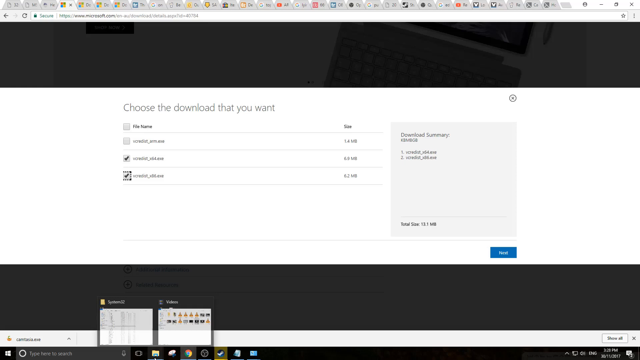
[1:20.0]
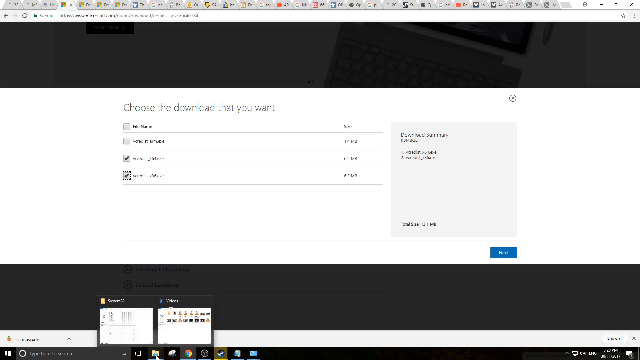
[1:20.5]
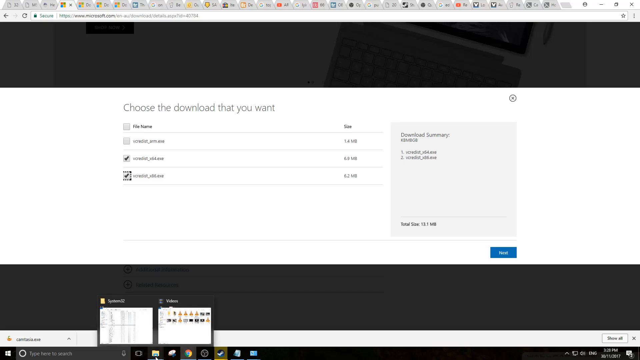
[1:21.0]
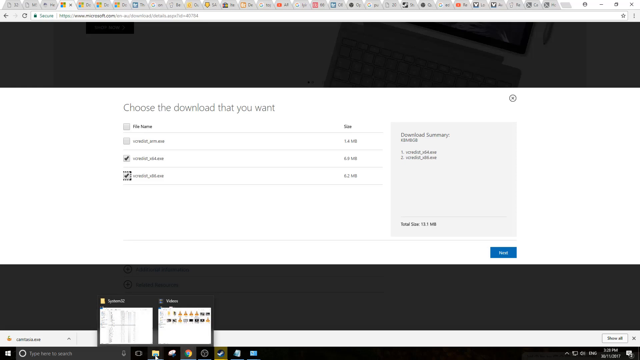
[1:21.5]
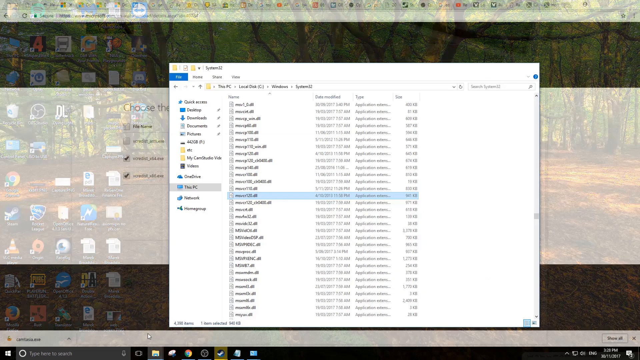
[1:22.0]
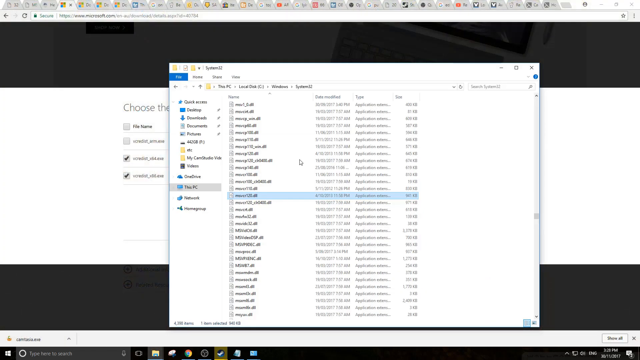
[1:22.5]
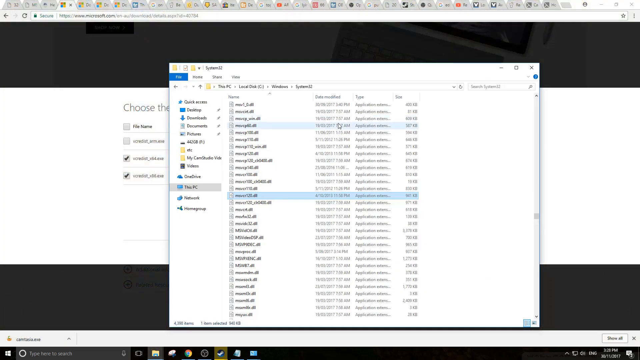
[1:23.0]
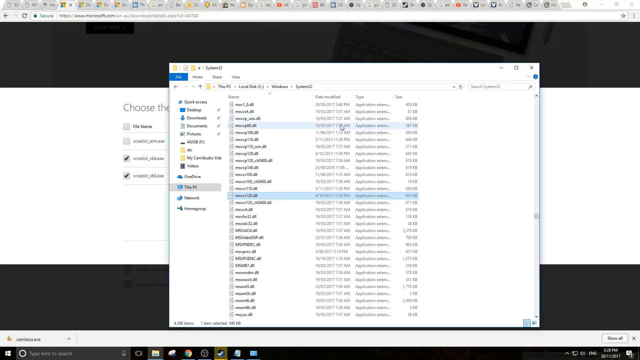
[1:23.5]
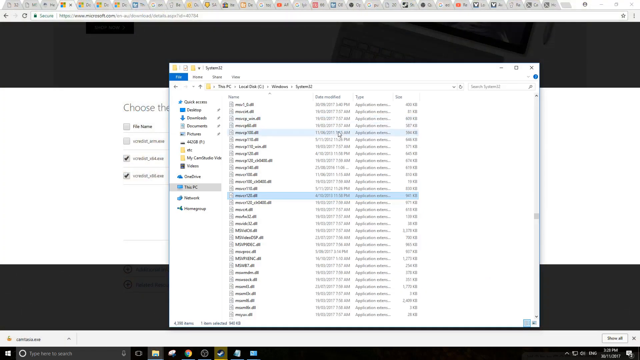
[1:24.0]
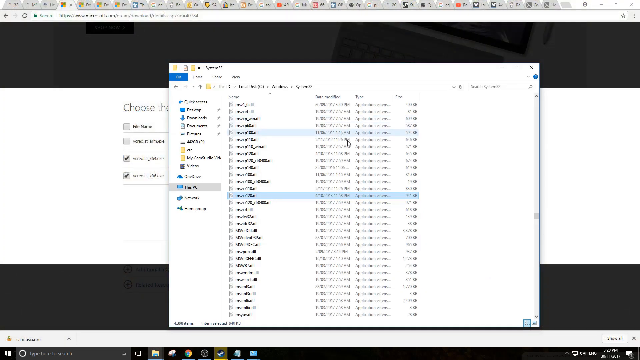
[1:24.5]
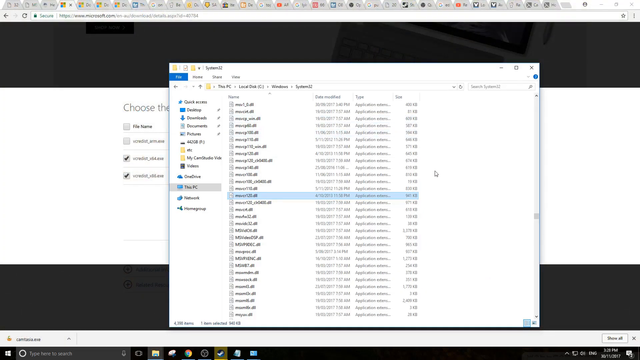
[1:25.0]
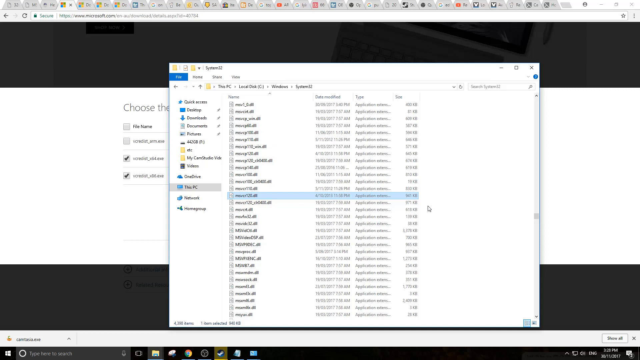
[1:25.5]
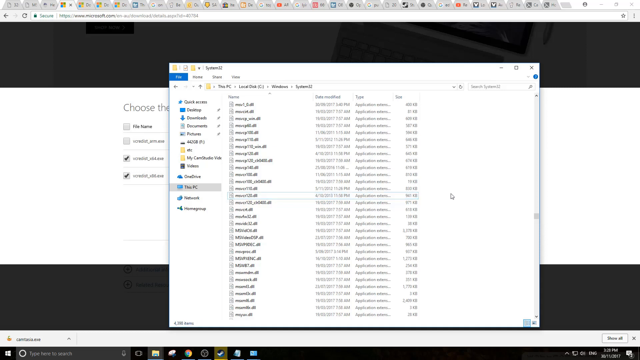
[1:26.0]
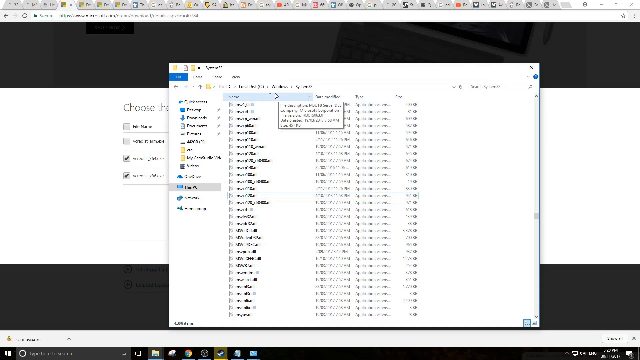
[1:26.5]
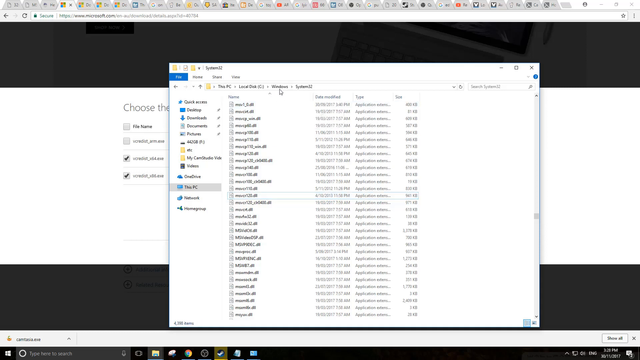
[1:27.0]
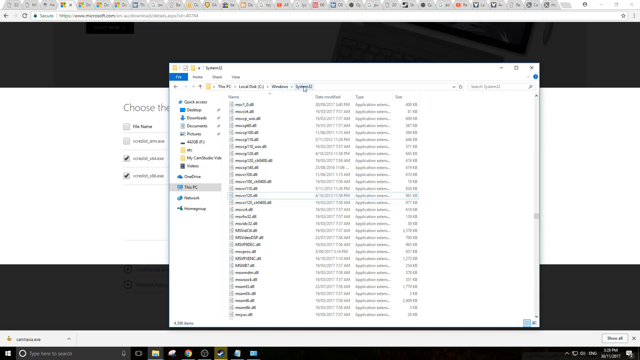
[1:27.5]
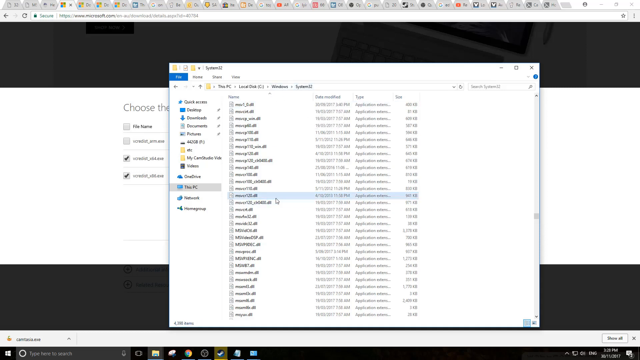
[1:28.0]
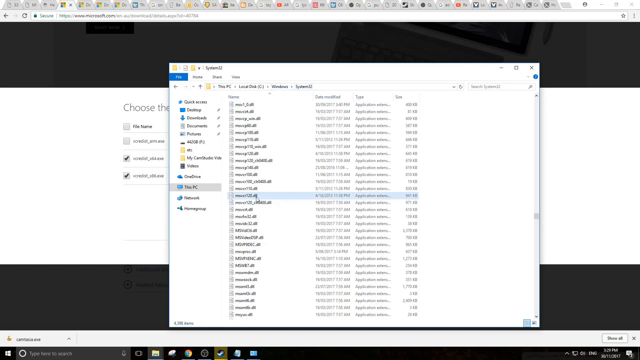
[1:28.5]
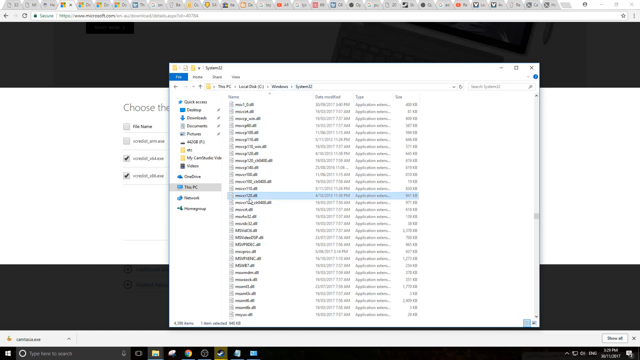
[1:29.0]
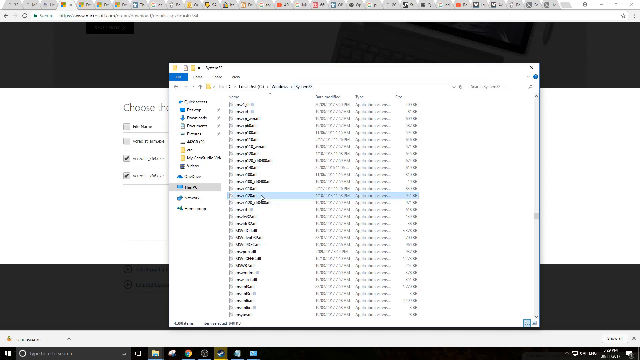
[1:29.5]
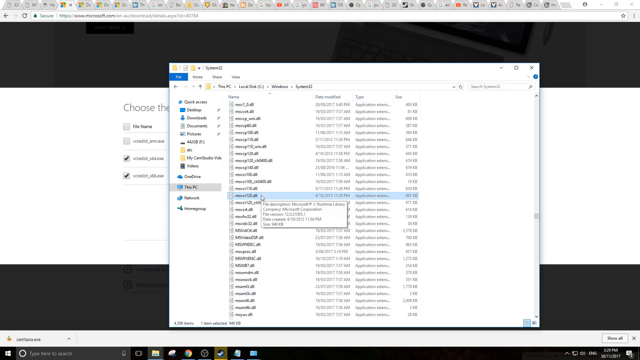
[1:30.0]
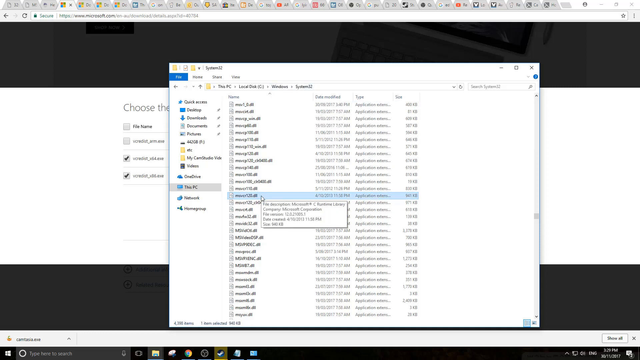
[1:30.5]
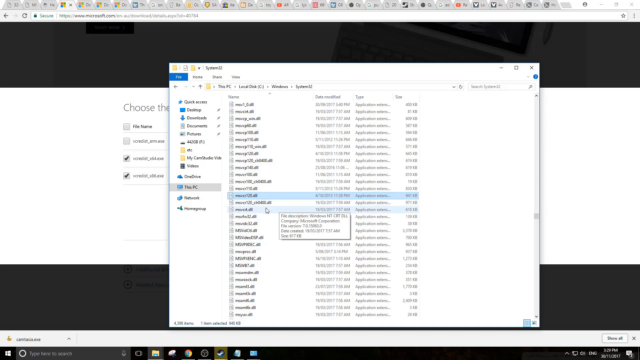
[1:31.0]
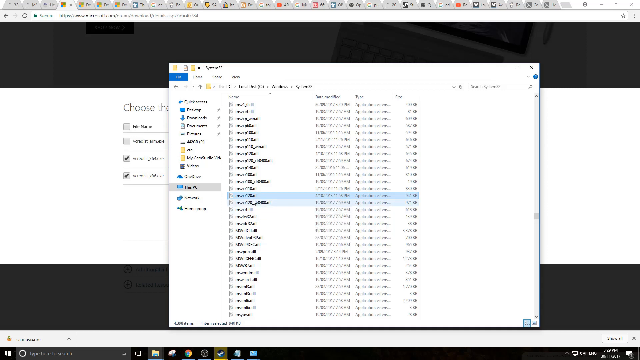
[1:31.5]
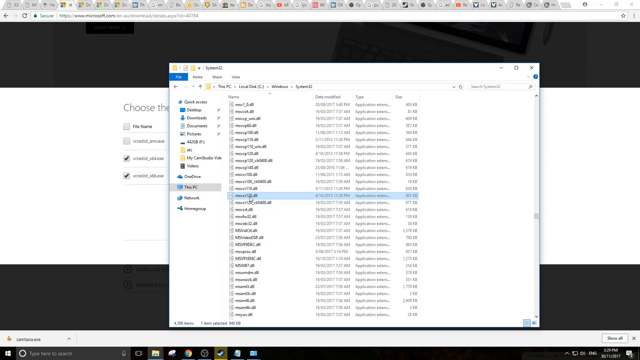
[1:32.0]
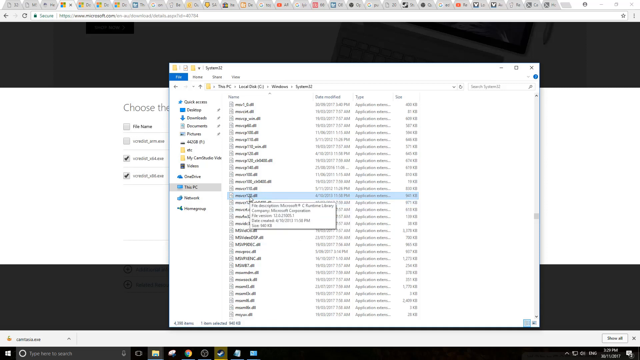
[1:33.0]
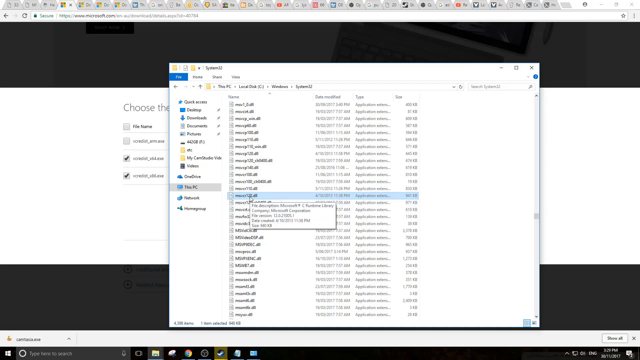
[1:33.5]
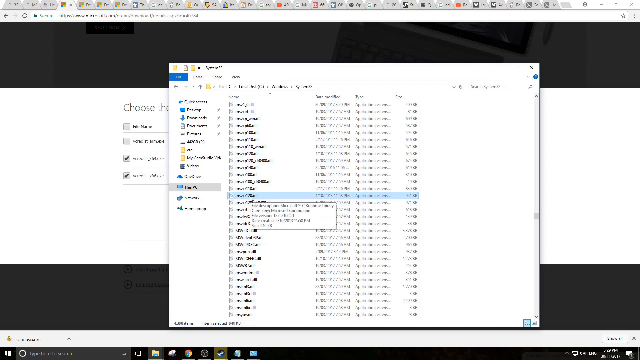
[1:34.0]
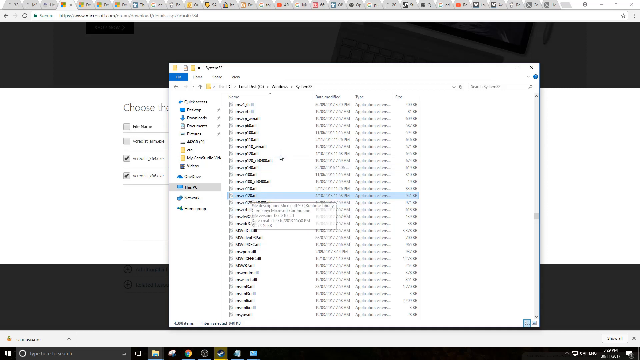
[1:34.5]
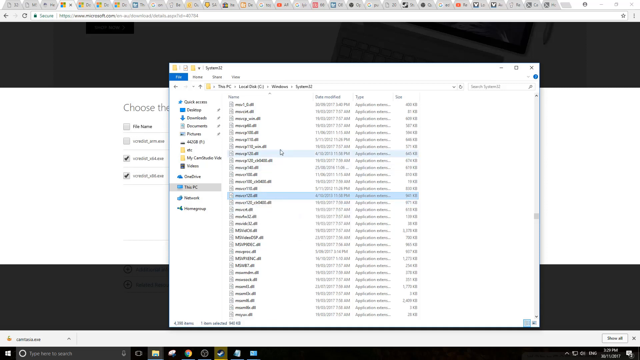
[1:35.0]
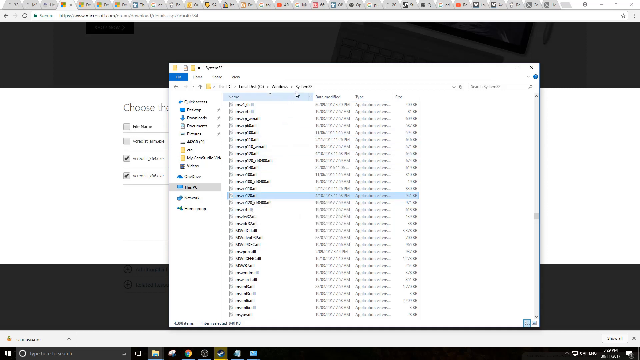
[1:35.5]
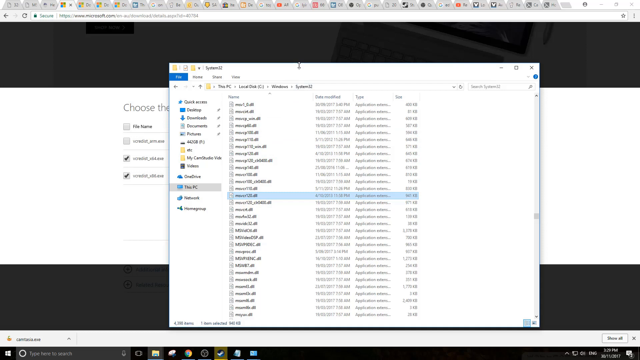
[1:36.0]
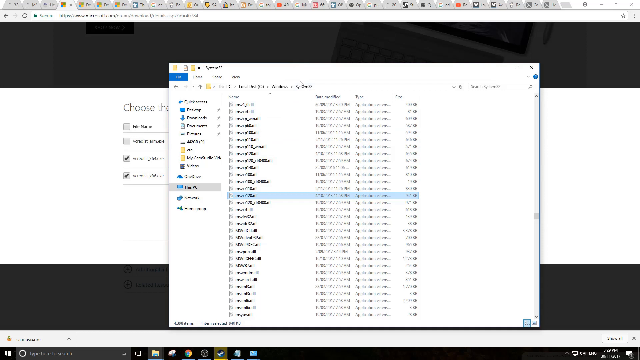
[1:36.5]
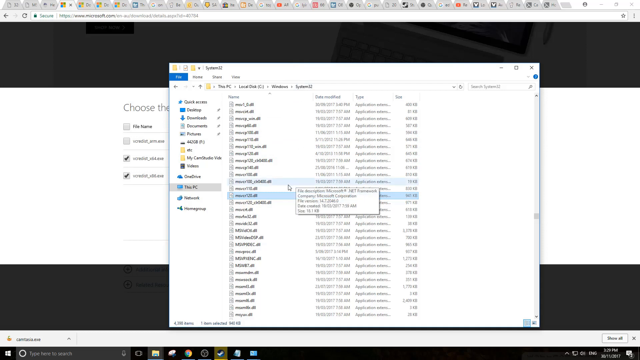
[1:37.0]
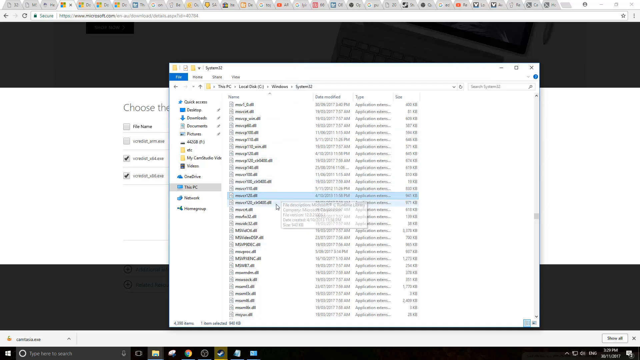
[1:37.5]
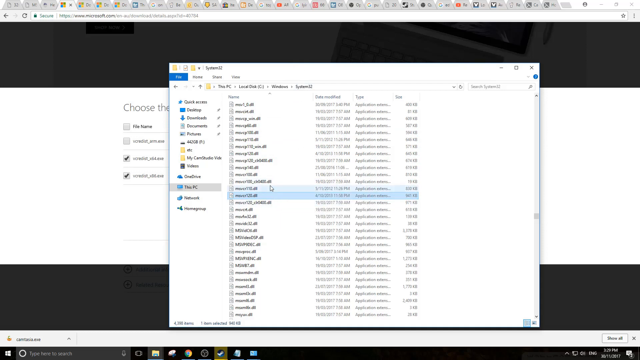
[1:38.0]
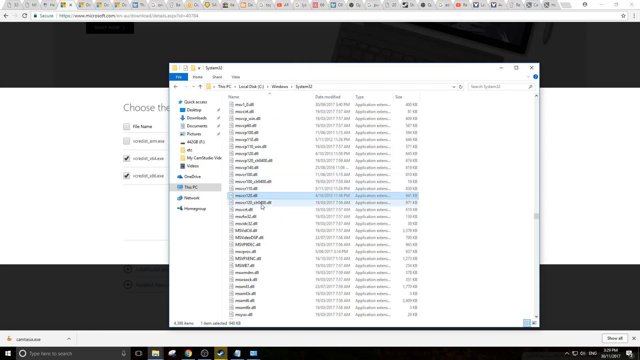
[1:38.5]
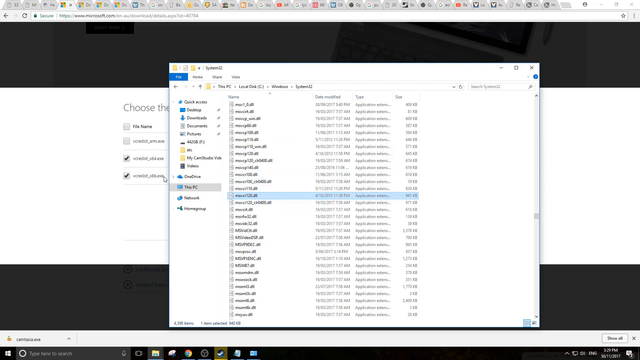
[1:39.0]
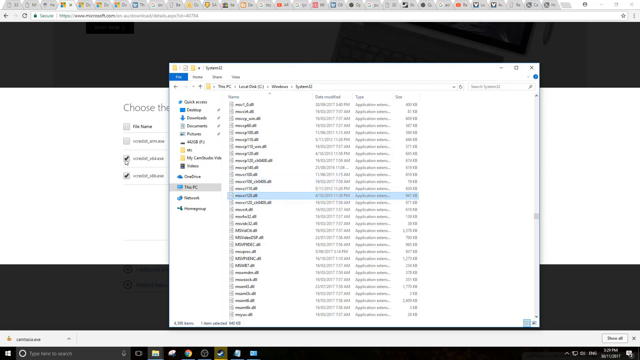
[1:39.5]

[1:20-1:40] A view of the user's files on the local disk appears in front of the "Choose the download" screen. The file path is This PC, Local Disk C, Windows, System32. About halfway down the list, one file is highlighted in blue. The user hovers the mouse over the Windows and System32 path, then moves down to the highlighted file; hovering over its name brings up a description with the file version and date created. Columns next to the file names show the date modified, type and size. The user moves the mouse up and down, then goes back to the download page and draws a ring with the mouse around the two selected, ticked files. The video then stops.